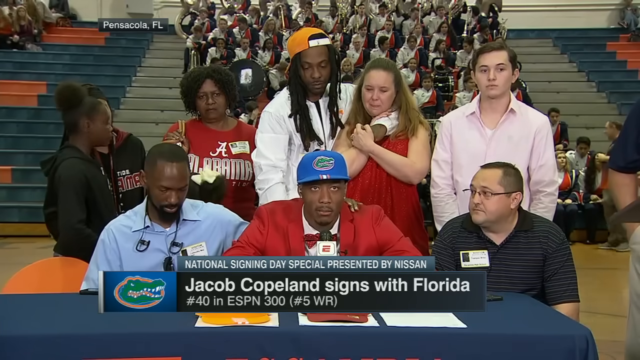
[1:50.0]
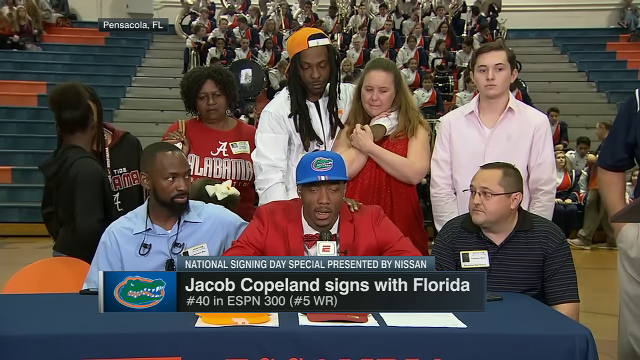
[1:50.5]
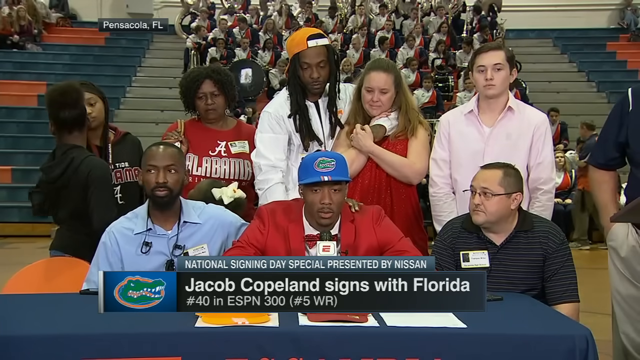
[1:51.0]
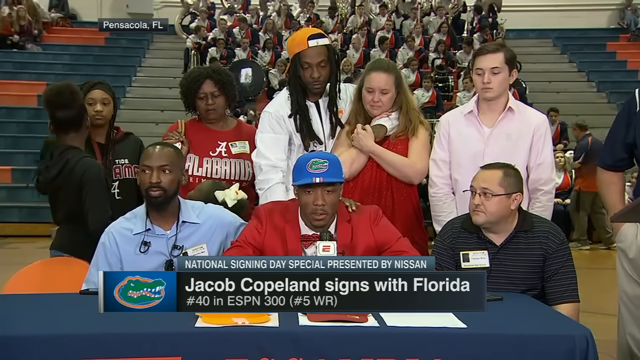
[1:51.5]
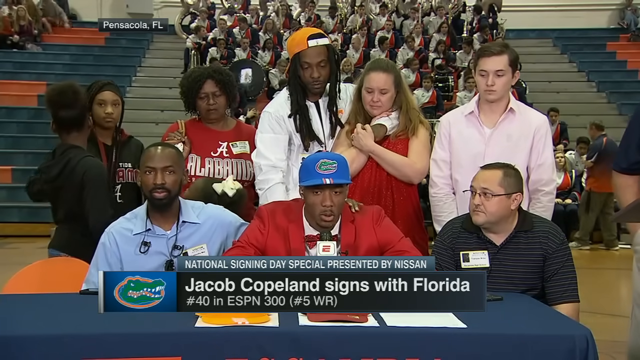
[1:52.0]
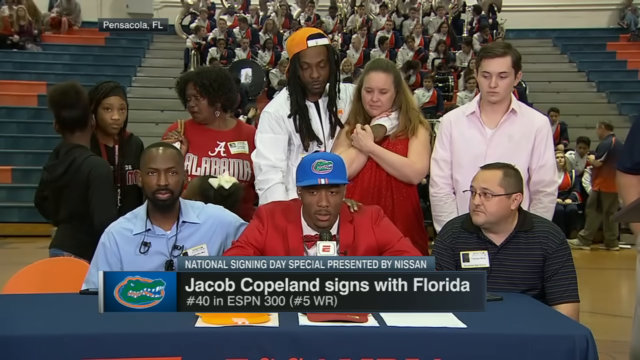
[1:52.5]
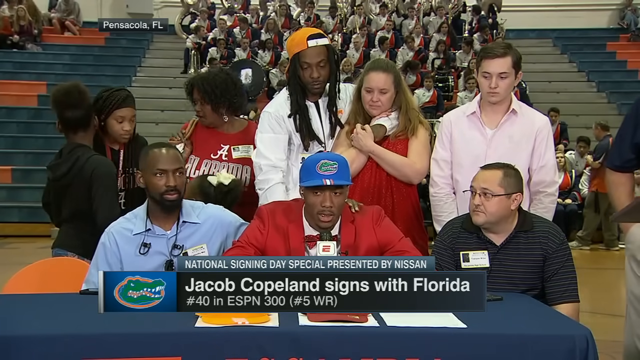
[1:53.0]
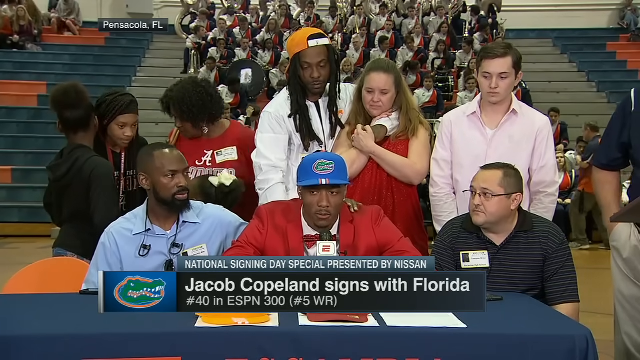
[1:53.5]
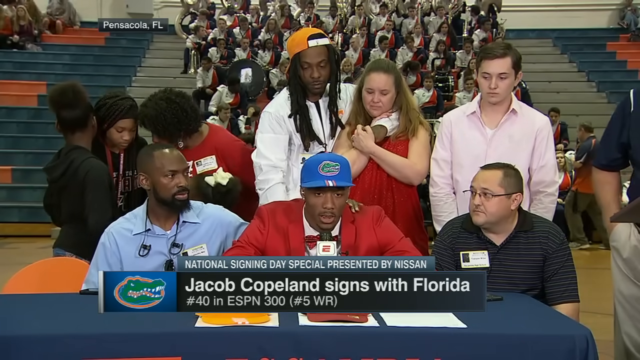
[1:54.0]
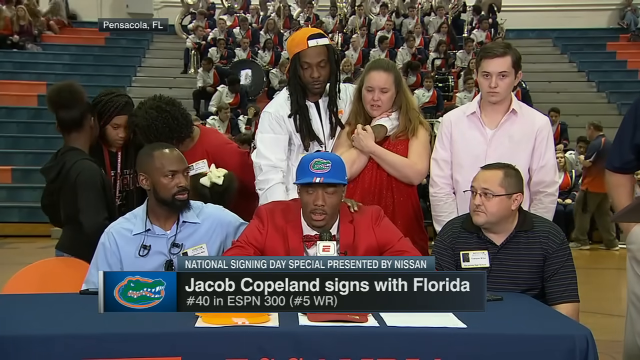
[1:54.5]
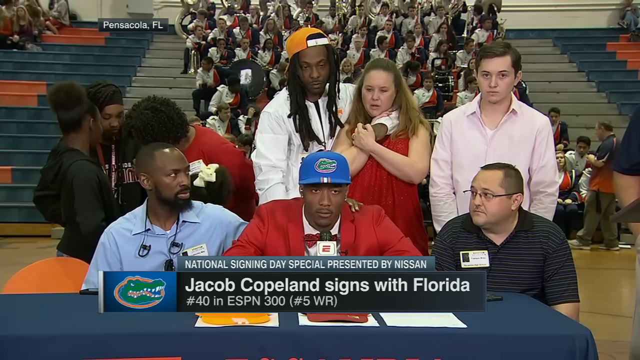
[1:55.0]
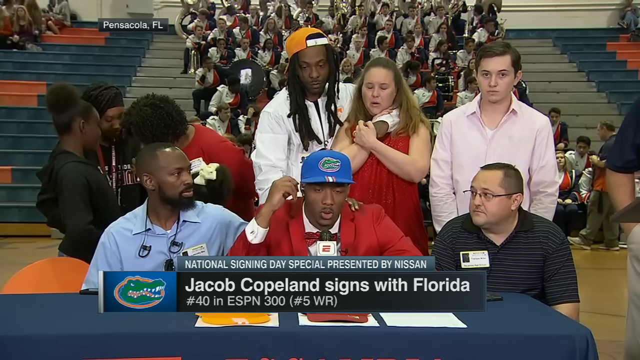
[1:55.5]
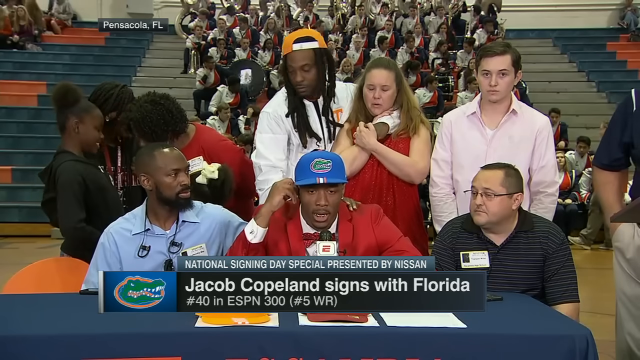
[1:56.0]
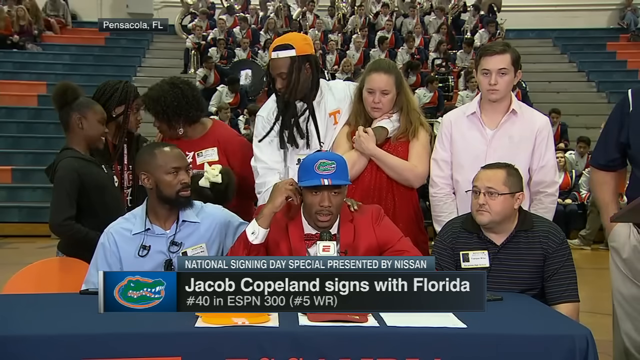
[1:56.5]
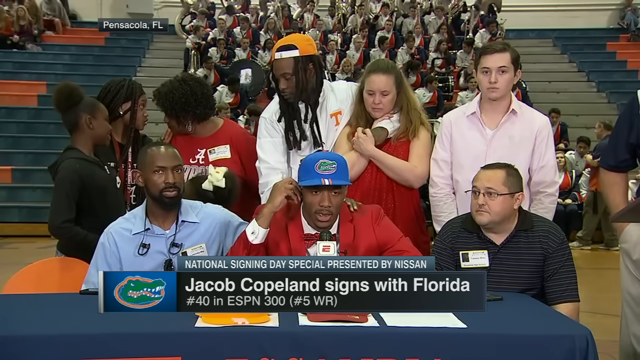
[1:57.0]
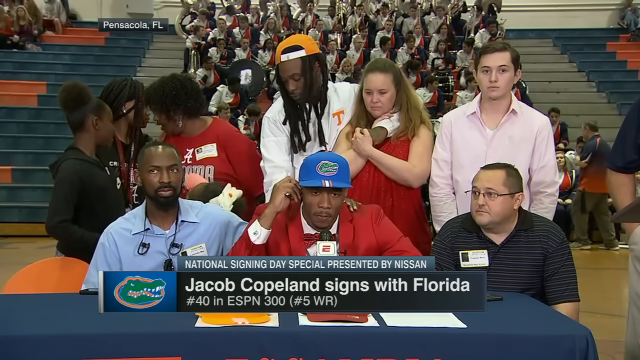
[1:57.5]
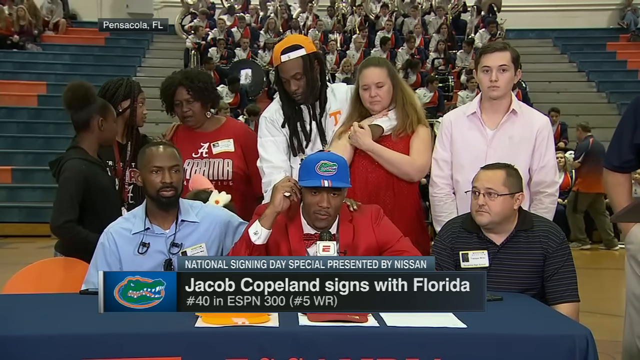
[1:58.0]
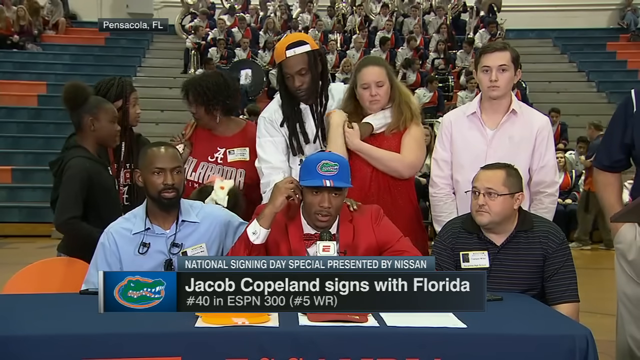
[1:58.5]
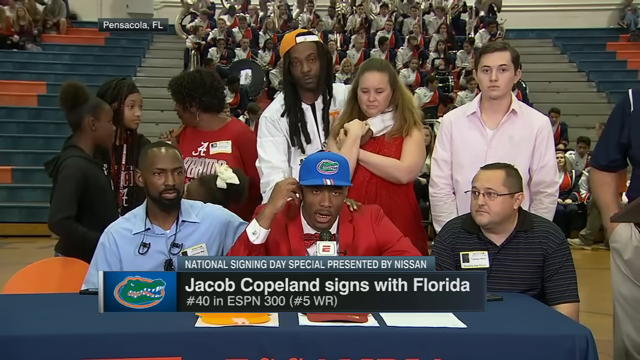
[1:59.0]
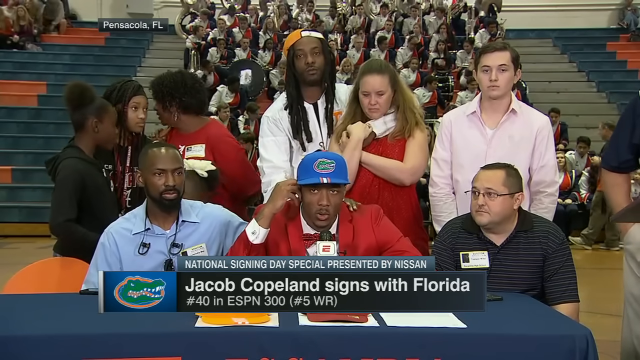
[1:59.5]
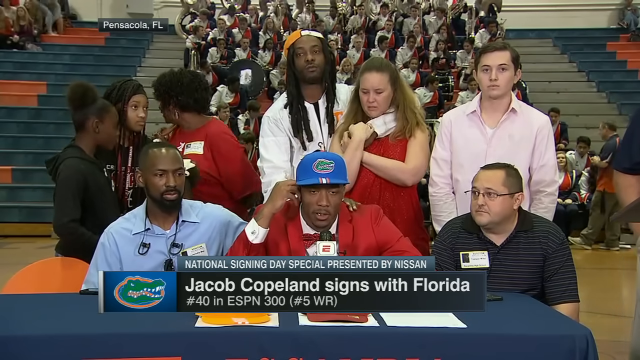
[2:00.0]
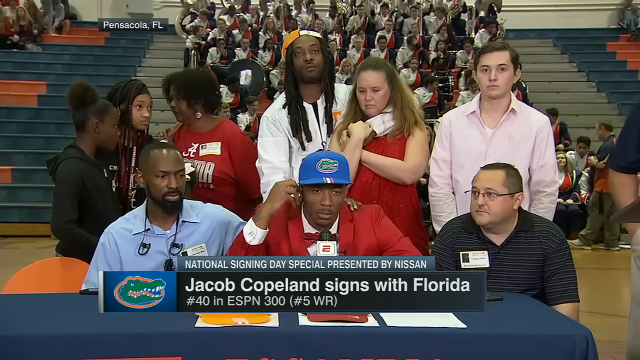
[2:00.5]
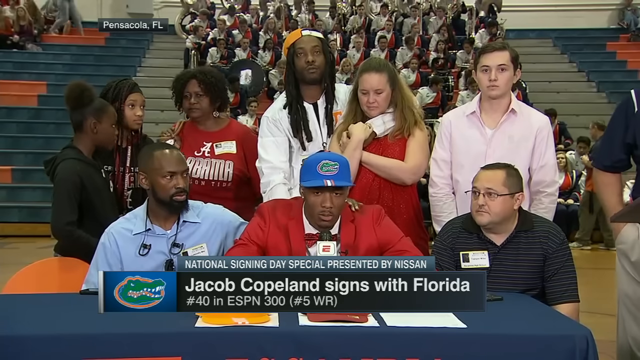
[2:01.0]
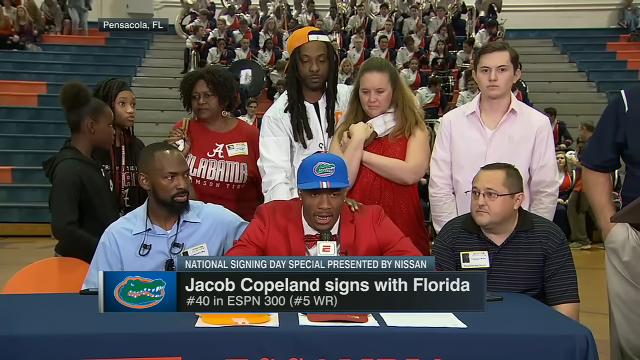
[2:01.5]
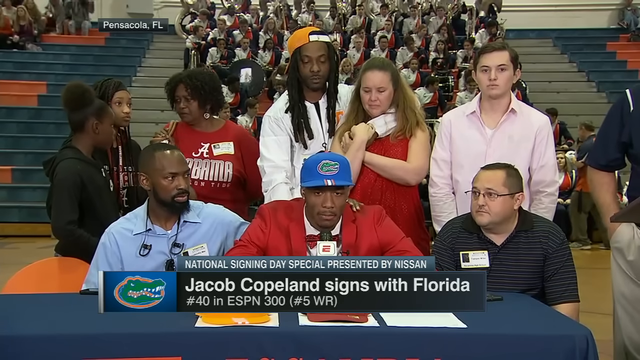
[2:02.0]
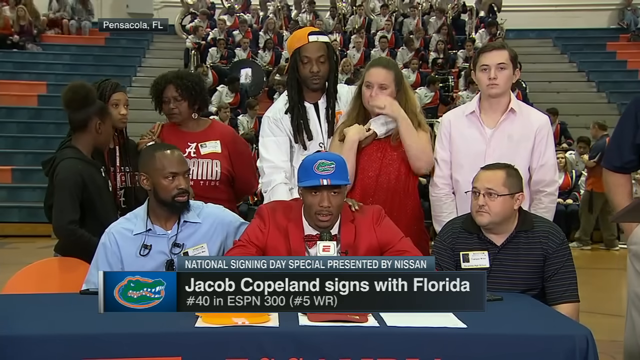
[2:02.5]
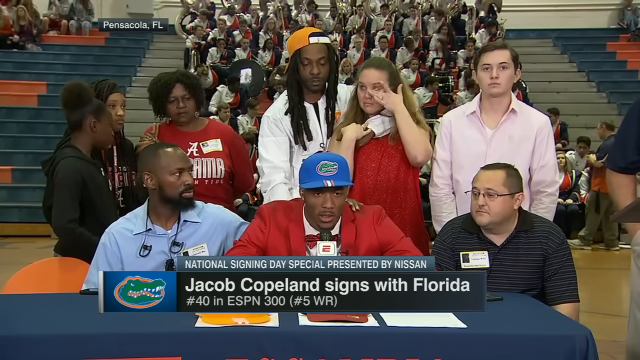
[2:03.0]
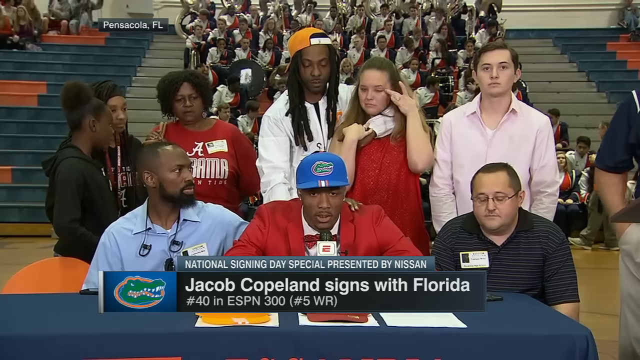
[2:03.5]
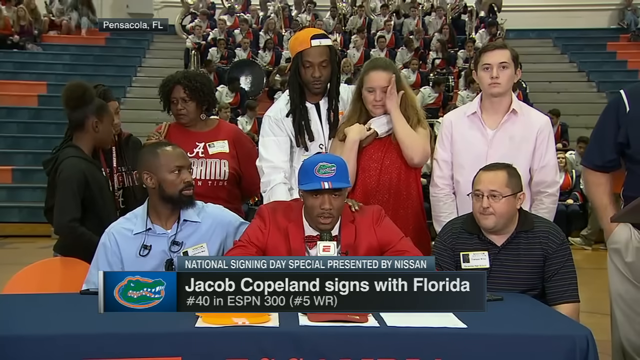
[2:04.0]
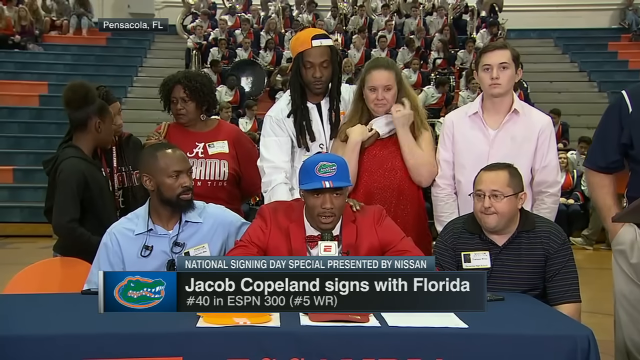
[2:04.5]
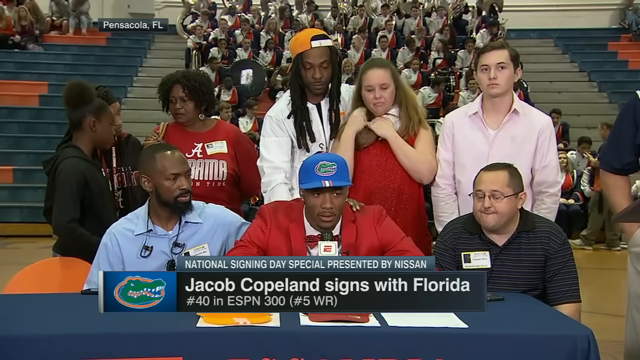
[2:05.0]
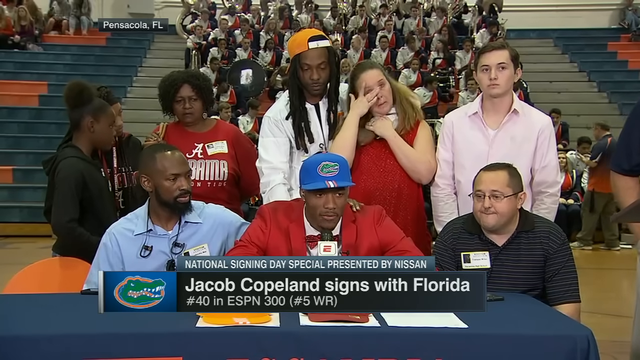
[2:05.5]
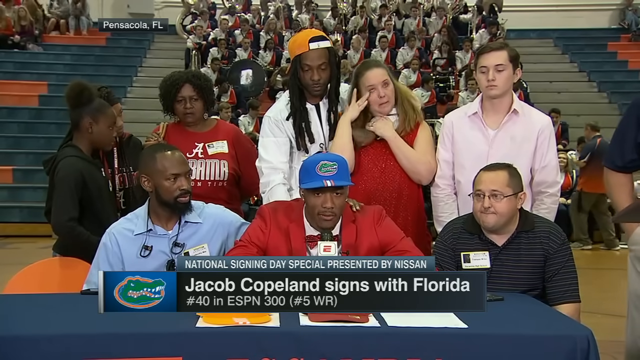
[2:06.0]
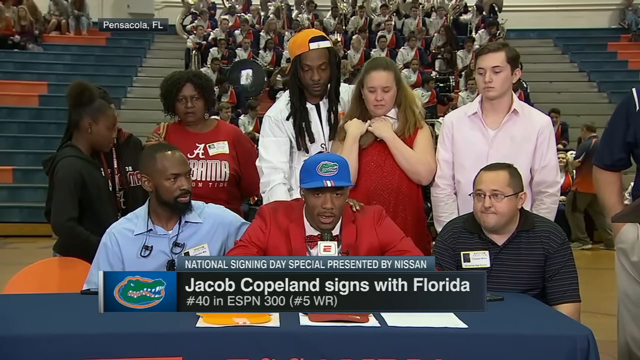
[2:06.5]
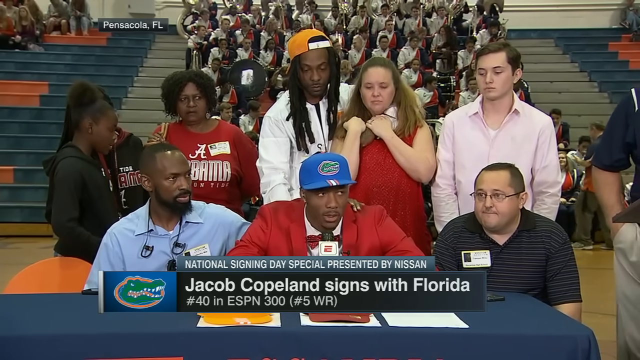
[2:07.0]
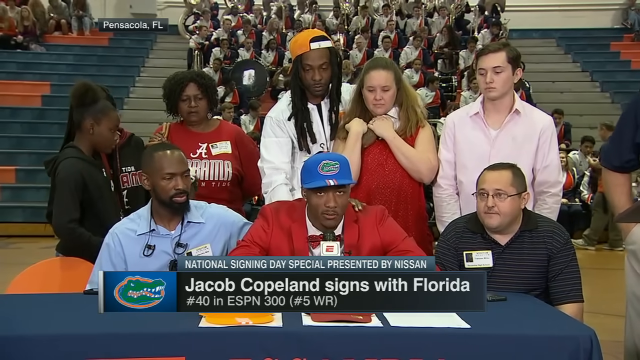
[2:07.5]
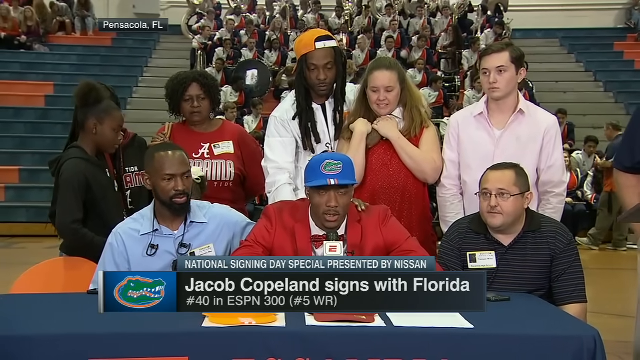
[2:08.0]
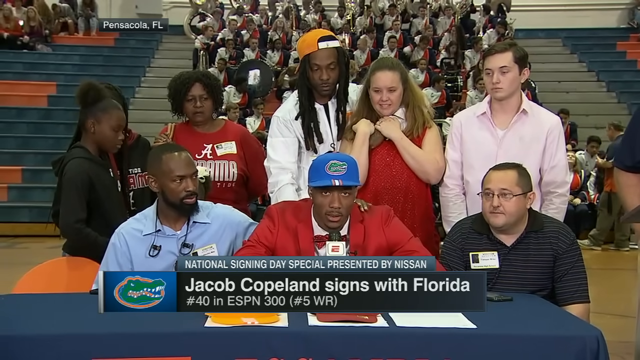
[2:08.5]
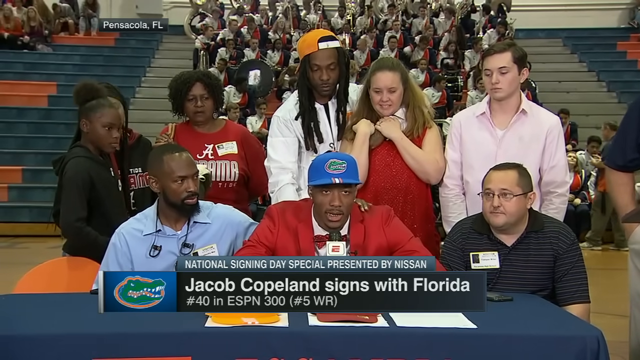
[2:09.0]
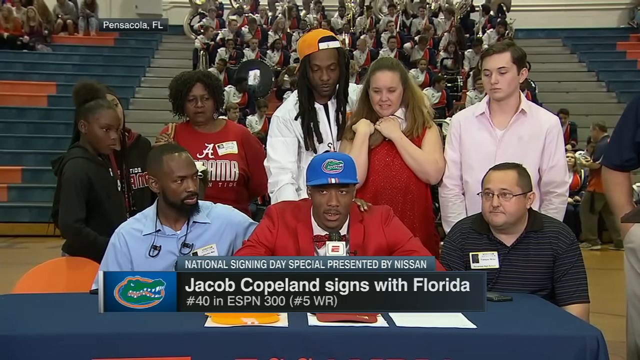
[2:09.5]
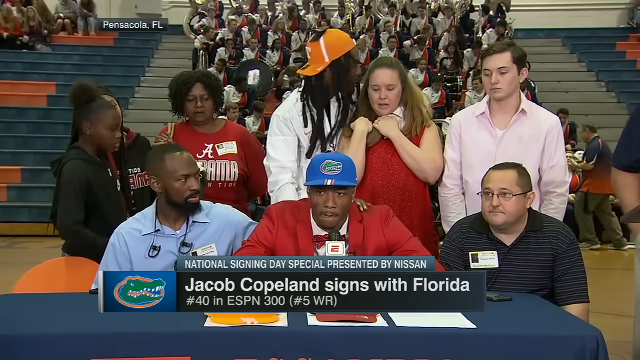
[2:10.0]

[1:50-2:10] Copeland, the number five wide receiver recruit nationwide and number 40 overall recruit according to ESPN, is engaged in a back-and-forth interview with a sportscaster from ESPNU. Copeland talks very deliberately into the microphone while a man to his right (the viewer's left) in a blue button-down shirt has his arm around him. Family and friends around him listen intently. A banner at the bottom of the screen shows that this is National Signing Day, a special presented by Nissan. A small gray horizontal box at the top left of the screen reads "Pensacola, Florida". In the auditorium, a rather sizable marching band dressed in unison in red, white and black is toward the center back, and toward the back on the left and right, people sit in the bleachers listening to Copeland.